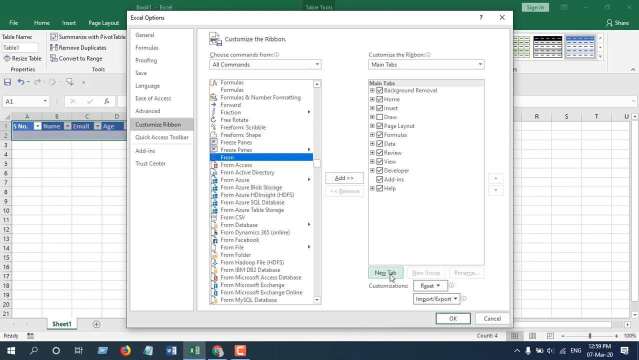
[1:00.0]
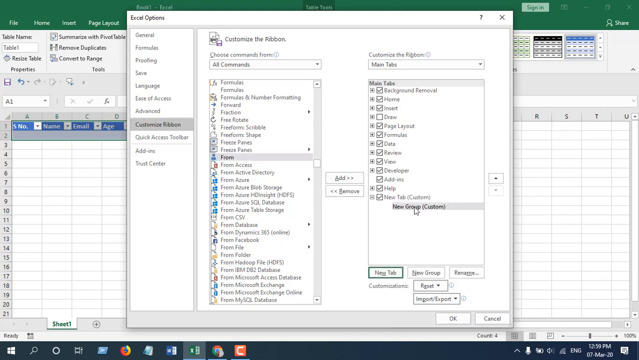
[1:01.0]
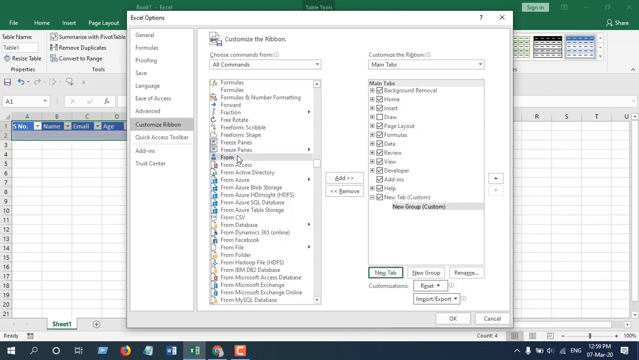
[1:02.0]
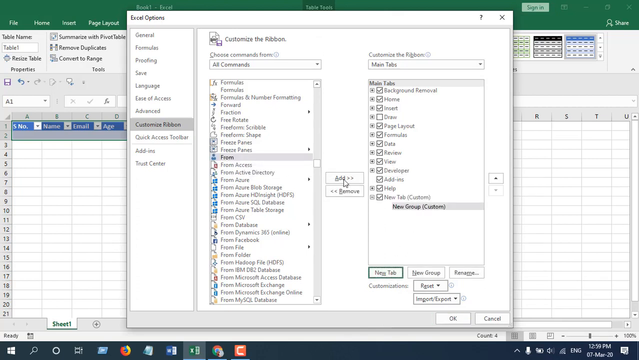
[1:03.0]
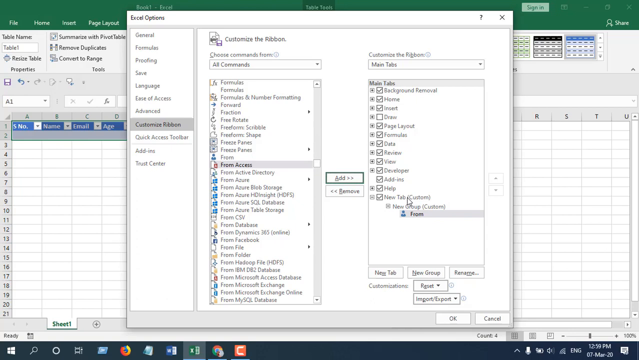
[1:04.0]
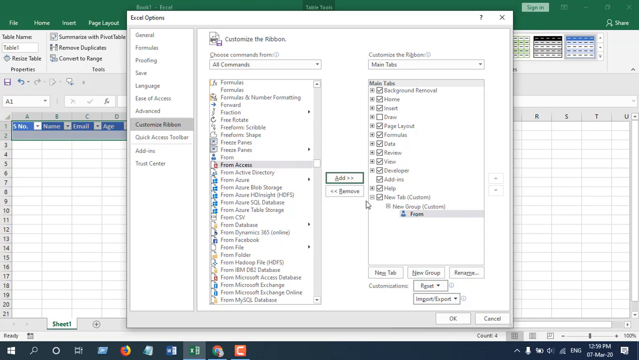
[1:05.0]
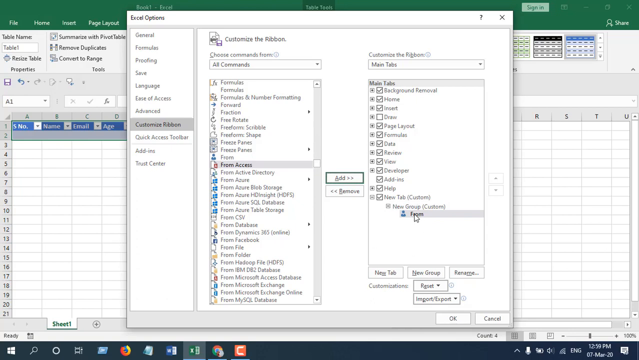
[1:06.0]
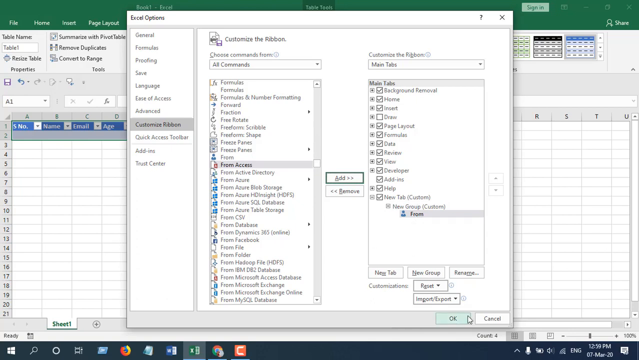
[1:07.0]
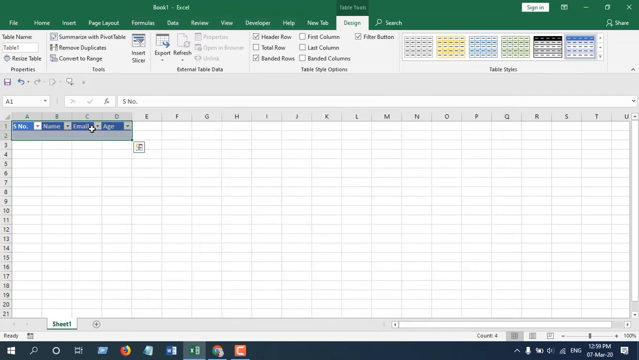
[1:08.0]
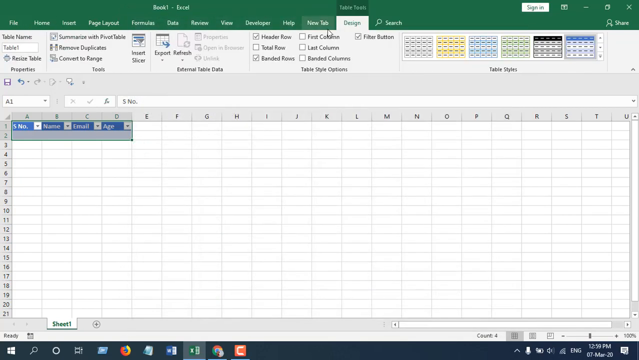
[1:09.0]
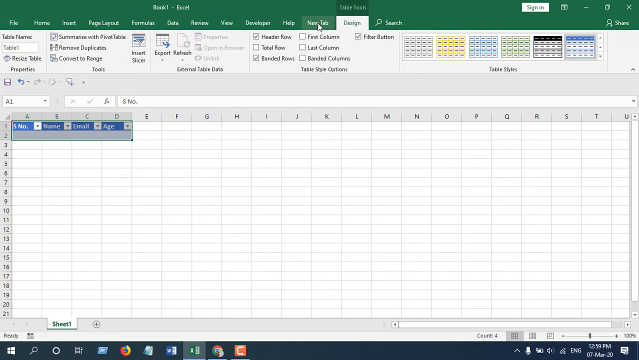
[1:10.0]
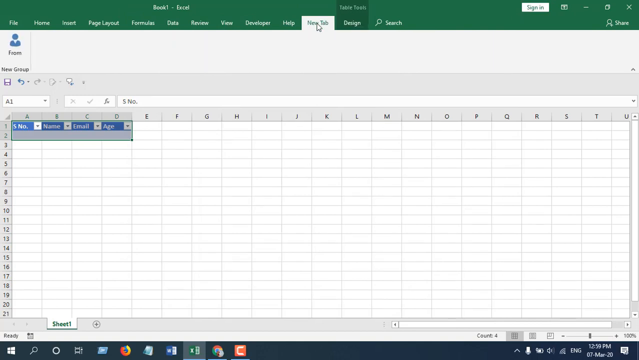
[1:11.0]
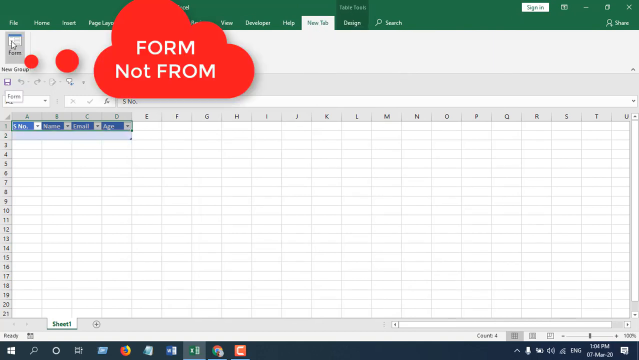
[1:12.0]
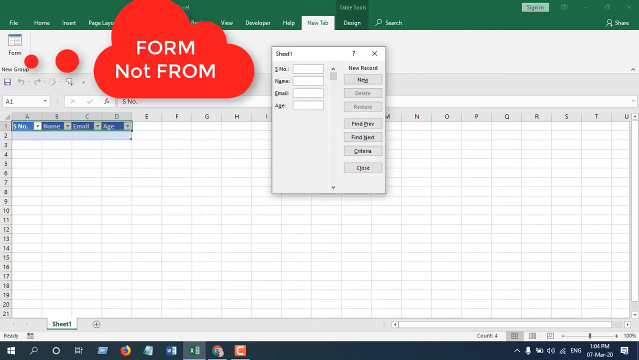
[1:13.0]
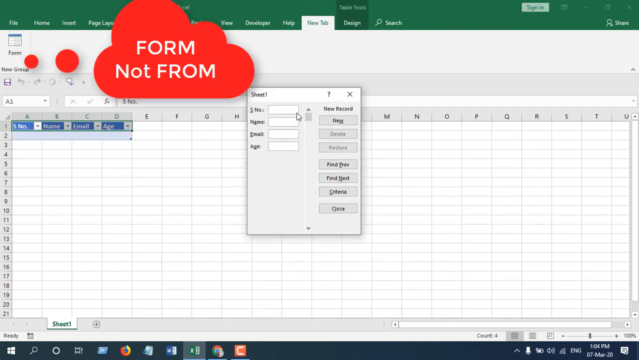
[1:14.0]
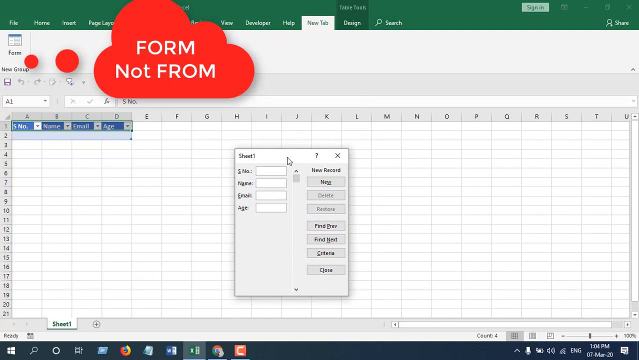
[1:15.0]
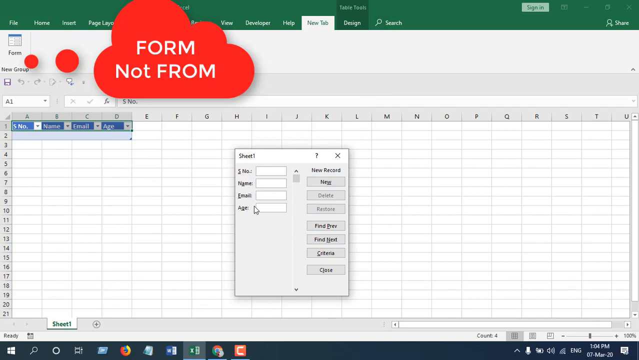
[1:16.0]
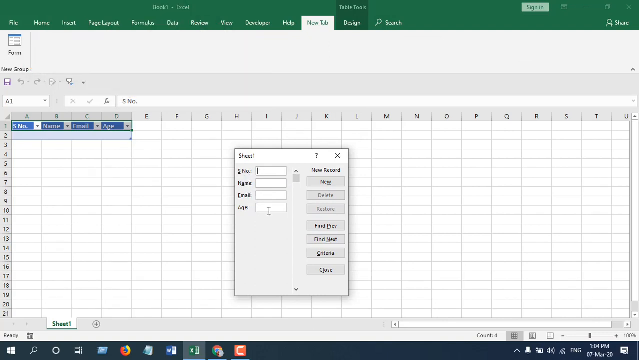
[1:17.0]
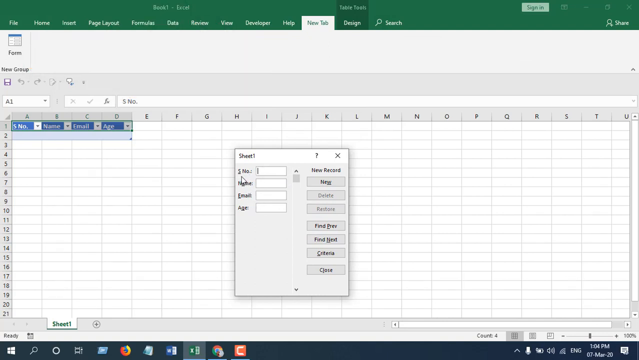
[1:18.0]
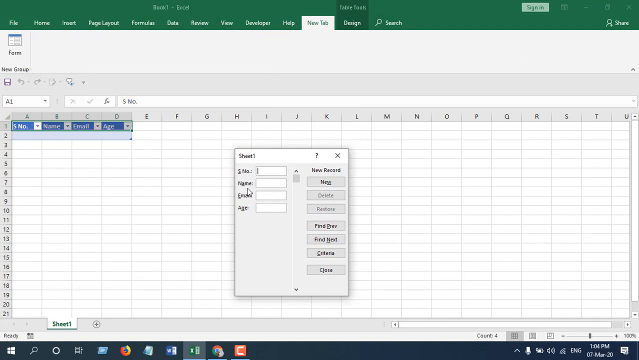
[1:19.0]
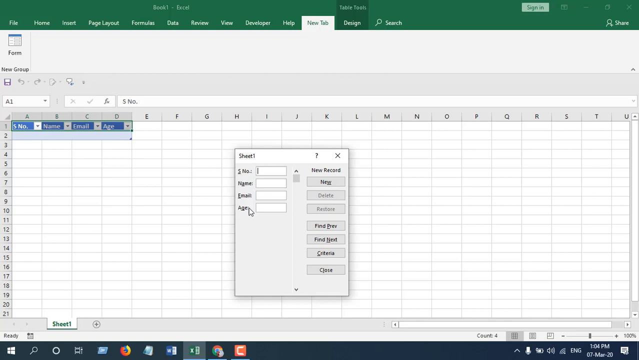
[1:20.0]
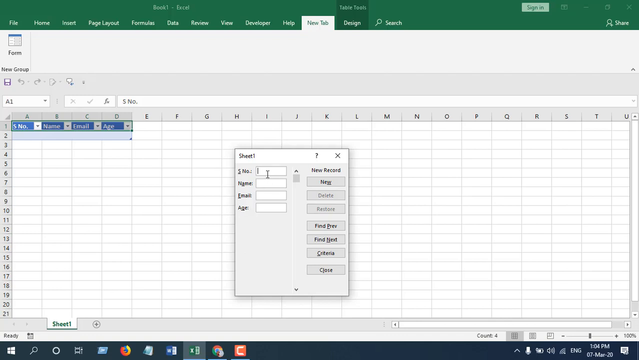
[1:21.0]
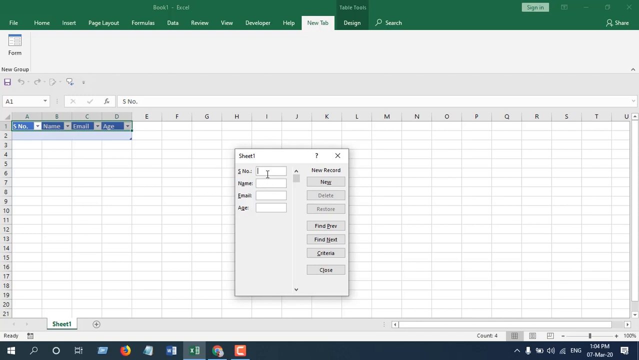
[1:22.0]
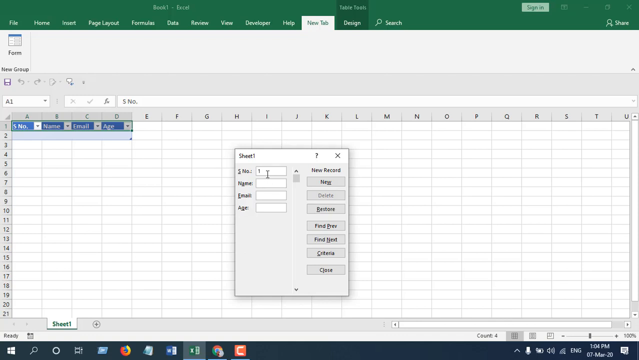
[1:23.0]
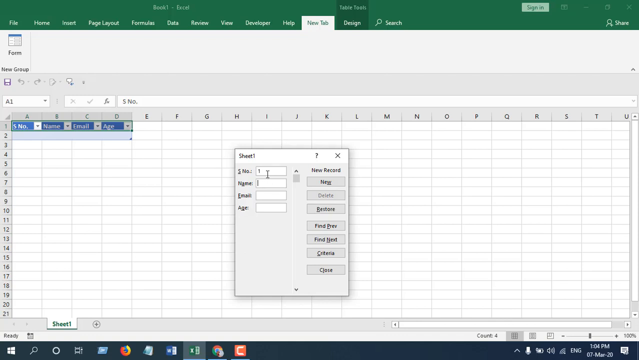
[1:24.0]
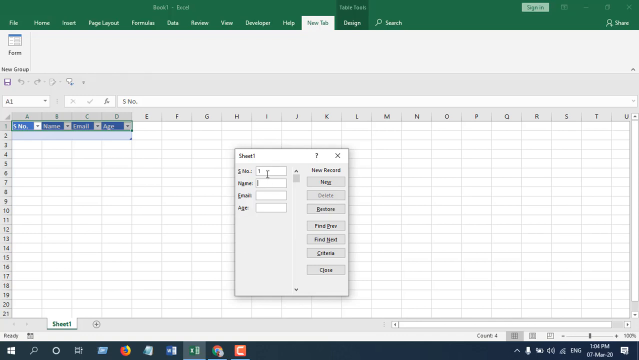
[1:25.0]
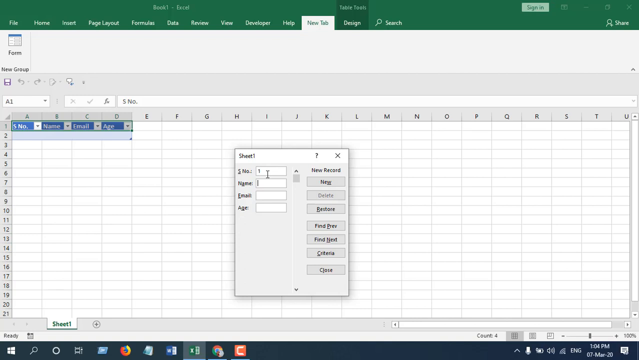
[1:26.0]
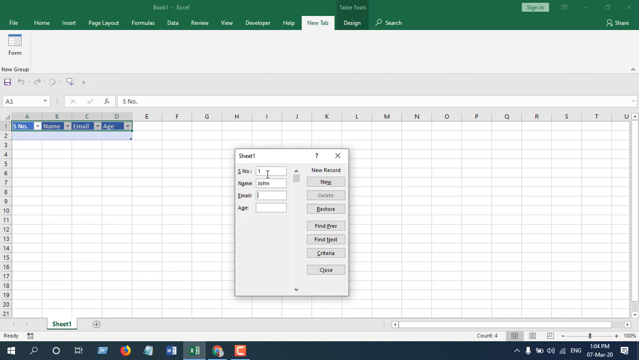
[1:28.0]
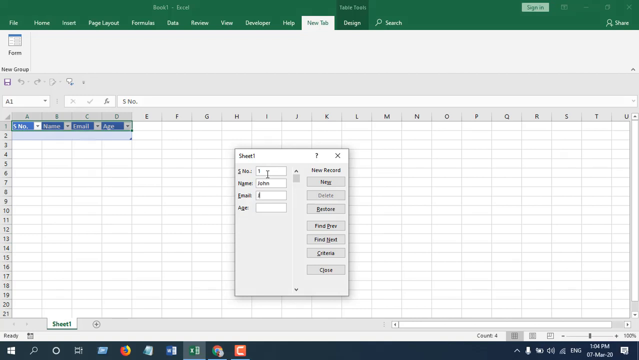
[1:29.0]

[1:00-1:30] The user navigates the Excel options and selects the sheet, then selects the names and the people and tries to input the information.